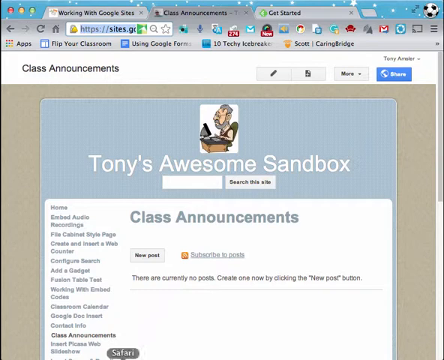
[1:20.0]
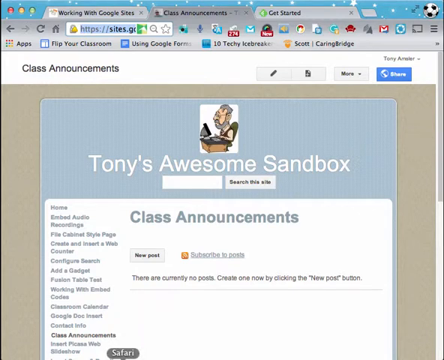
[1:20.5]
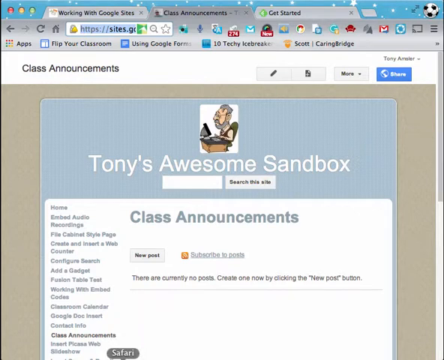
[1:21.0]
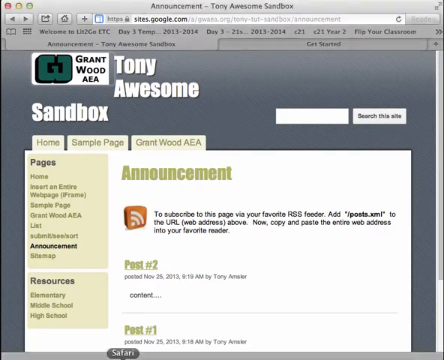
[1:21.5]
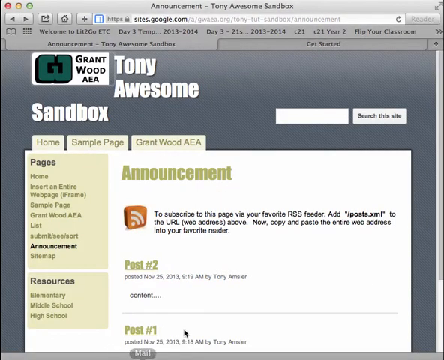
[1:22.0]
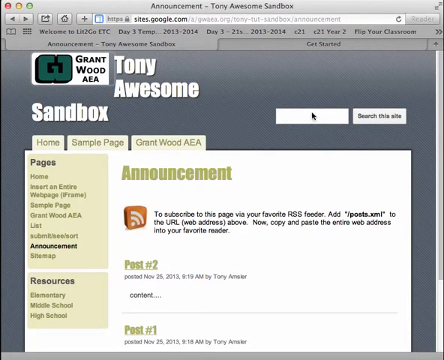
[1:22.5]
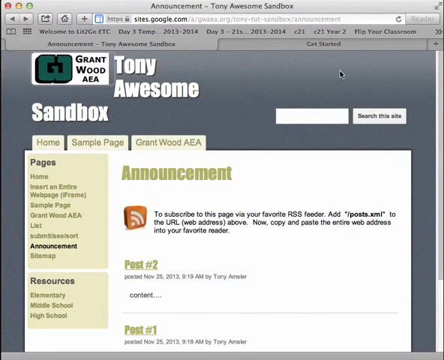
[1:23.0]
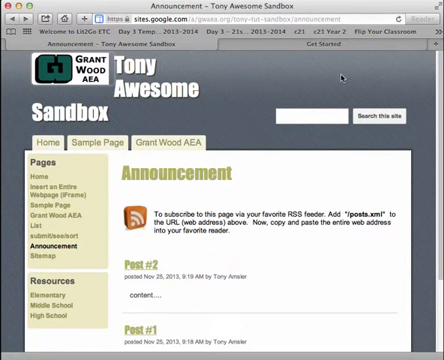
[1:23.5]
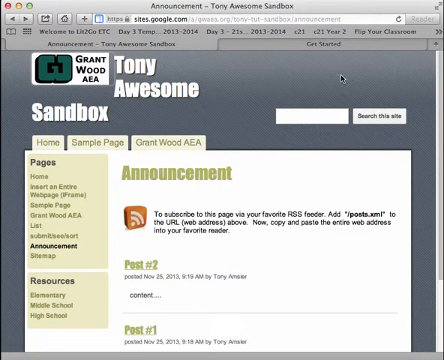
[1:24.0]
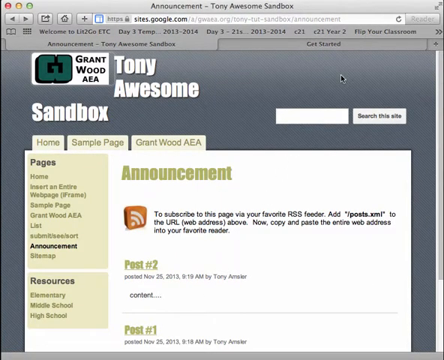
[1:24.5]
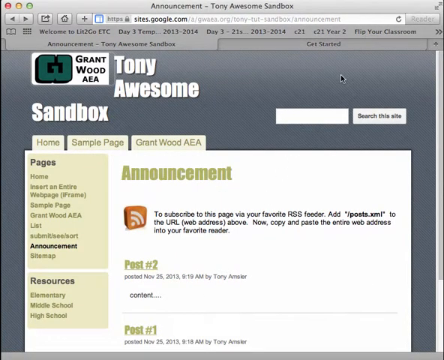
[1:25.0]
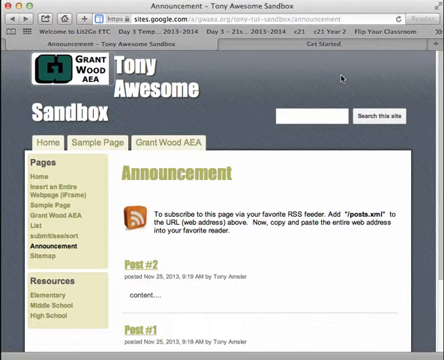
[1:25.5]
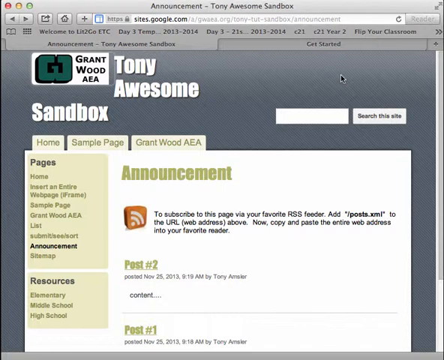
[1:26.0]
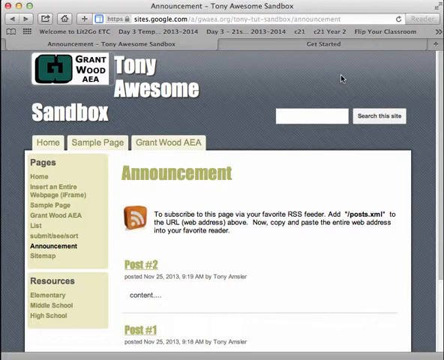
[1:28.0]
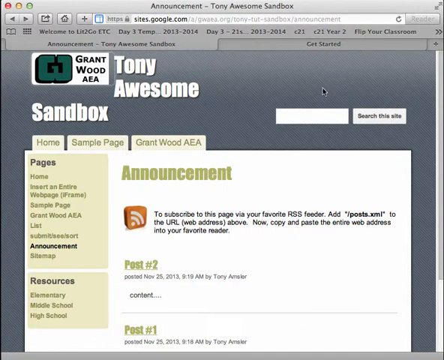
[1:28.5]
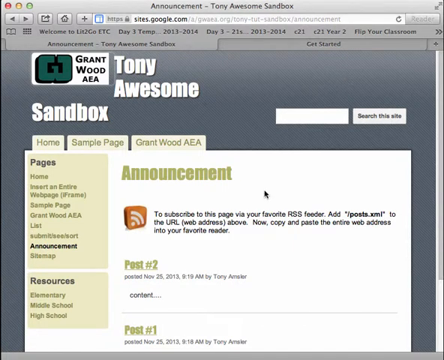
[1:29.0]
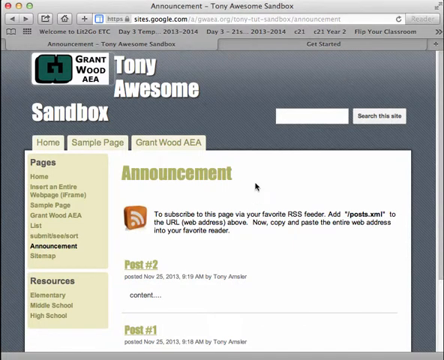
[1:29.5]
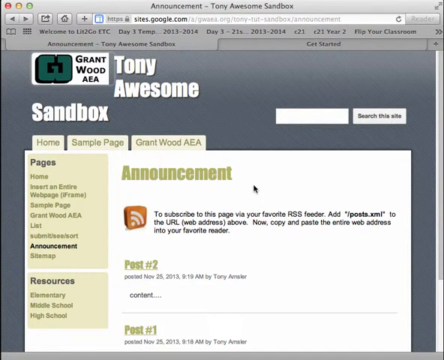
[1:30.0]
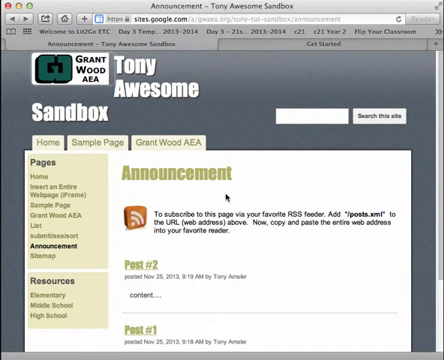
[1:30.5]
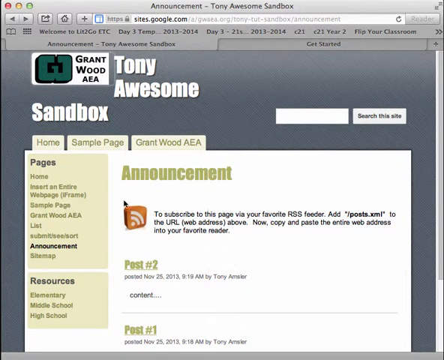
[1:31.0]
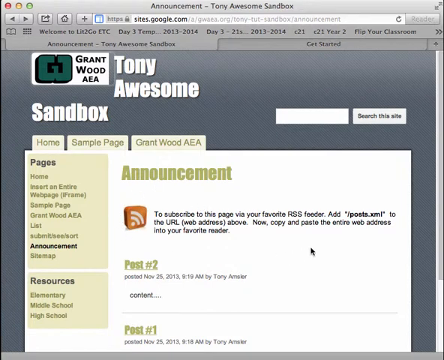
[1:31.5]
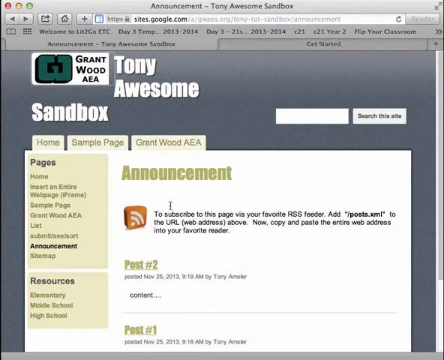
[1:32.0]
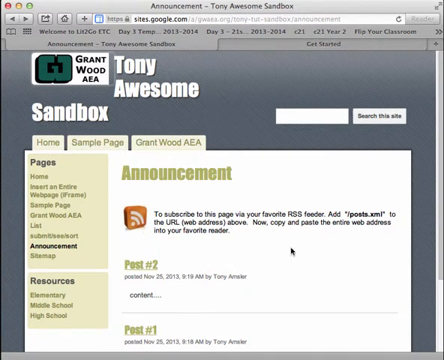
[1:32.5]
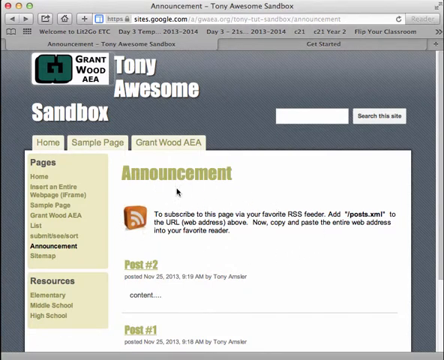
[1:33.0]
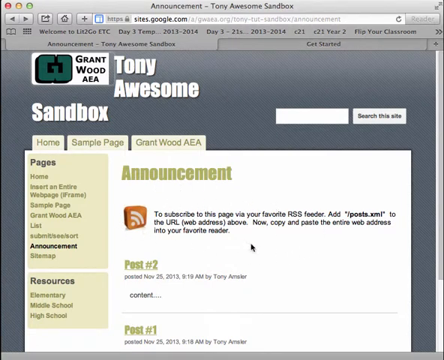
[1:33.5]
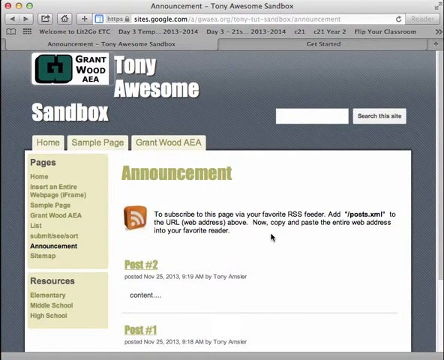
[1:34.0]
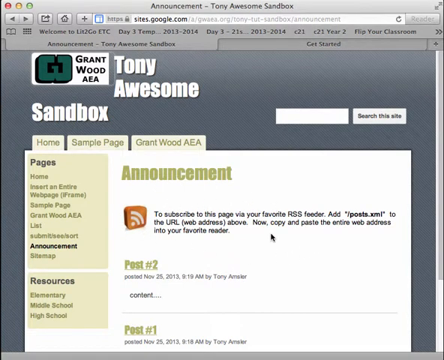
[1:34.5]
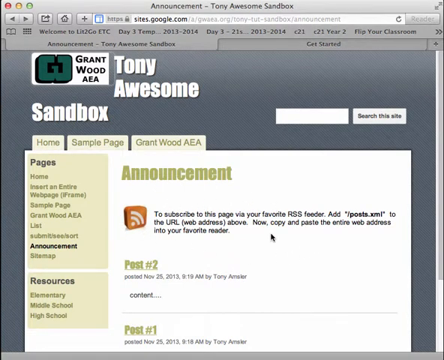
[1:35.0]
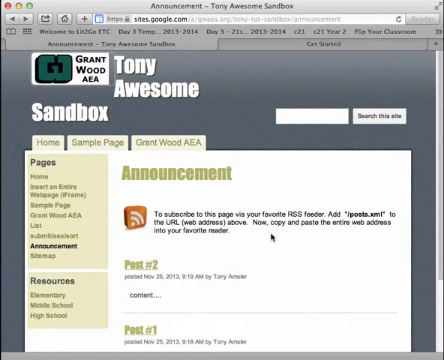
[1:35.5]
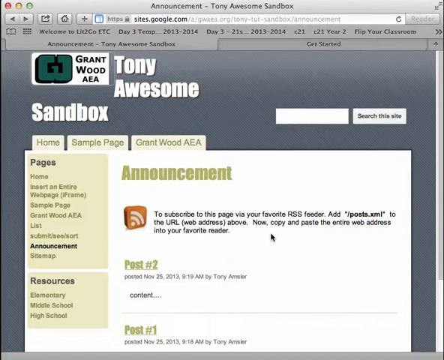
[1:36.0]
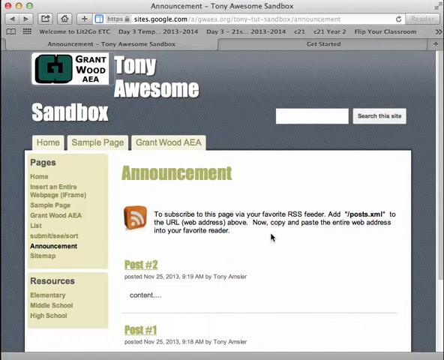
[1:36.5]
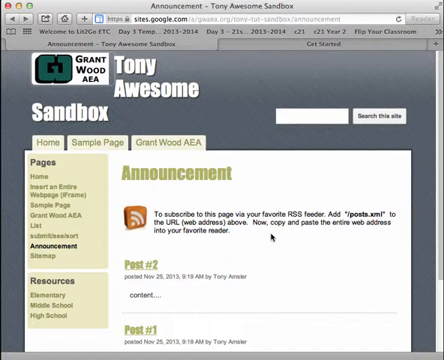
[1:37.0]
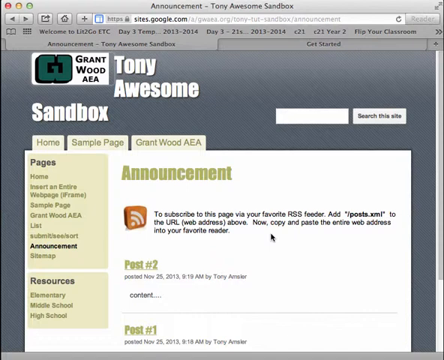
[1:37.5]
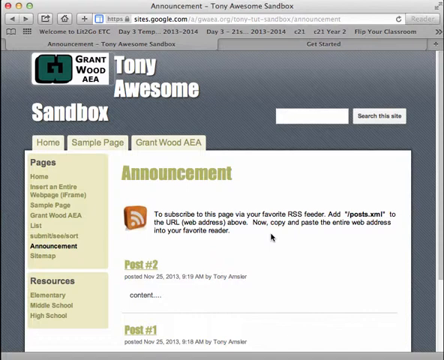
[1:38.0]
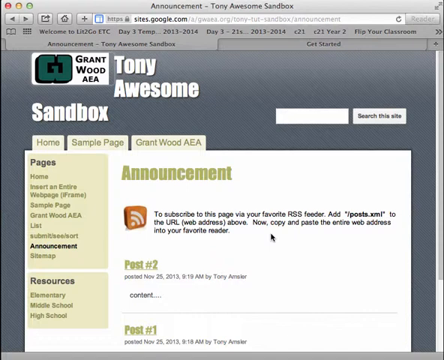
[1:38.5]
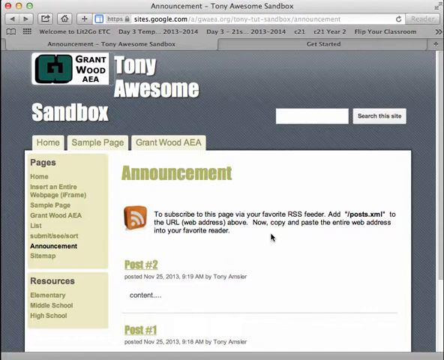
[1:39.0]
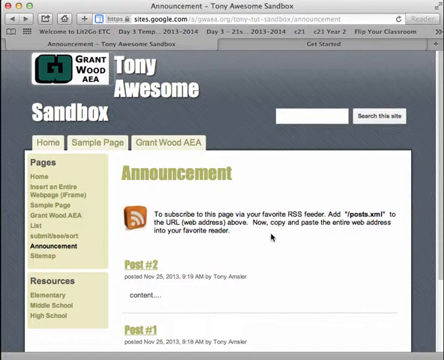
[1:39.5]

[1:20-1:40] The screen changes after an unclear click, showing "Tony Awesome." To the left is "Grant Wood AEA," with "Sandbox" under it. There is a search bar to the right and a box that says "Search this site." Towards the middle of the page are three tabs: Home, Sample Page, and GrantWood AEA. The middle of the page says "Announcement" with some information. Under that are "Post #2" and then "Post #1," each with a little bit of information under it. To the far left are two blocks, each containing a list of tabs. The first box is labeled "Pages," with the Announcement tab selected; all the tabs are written in green, but Announcement is in black. The second box is labeled "Resources."